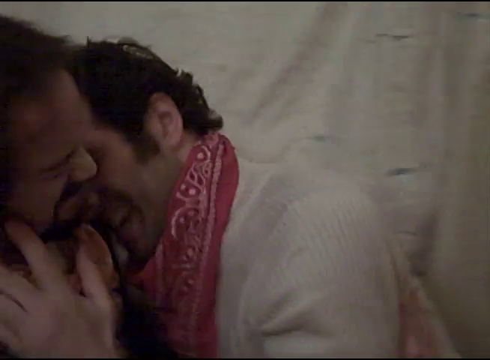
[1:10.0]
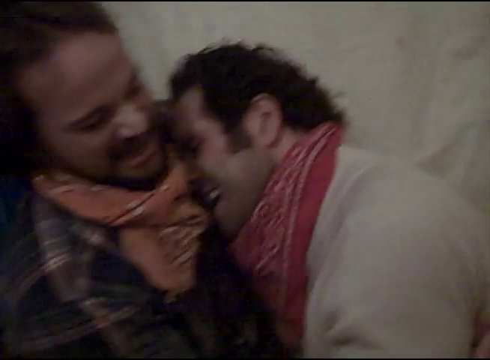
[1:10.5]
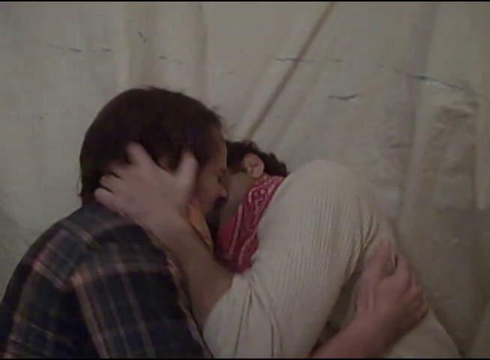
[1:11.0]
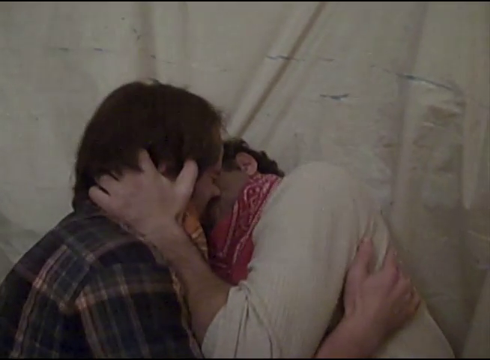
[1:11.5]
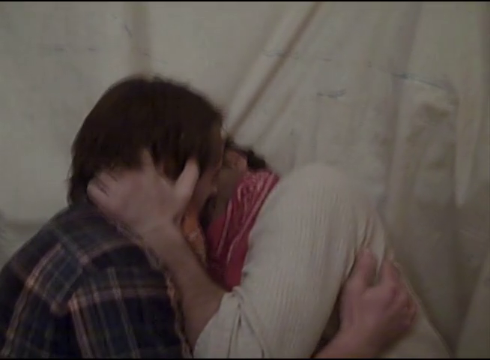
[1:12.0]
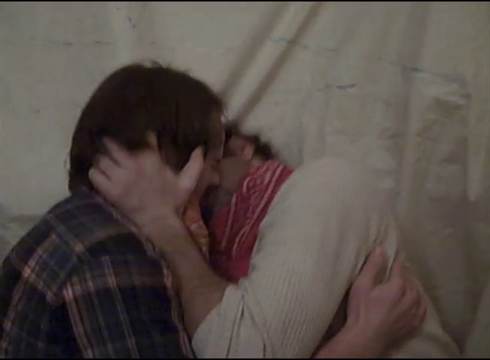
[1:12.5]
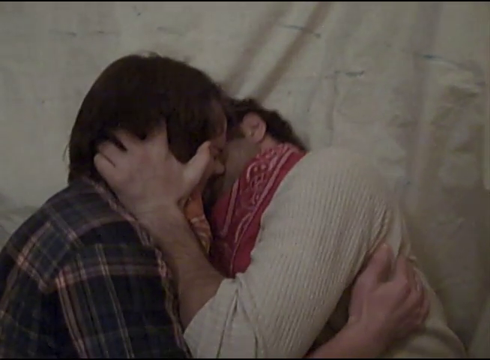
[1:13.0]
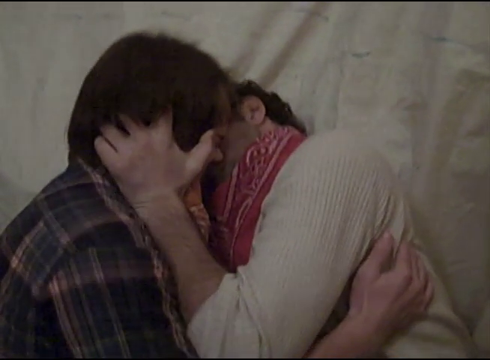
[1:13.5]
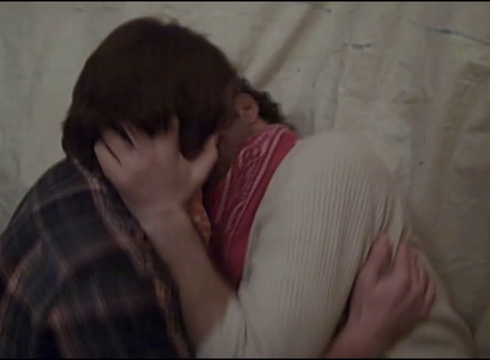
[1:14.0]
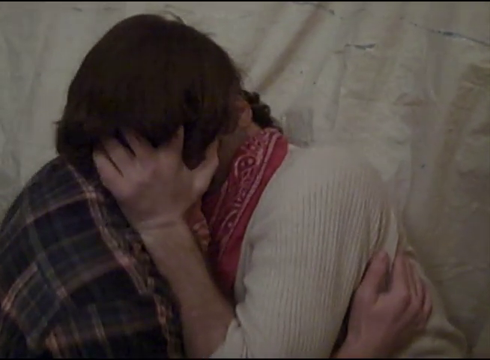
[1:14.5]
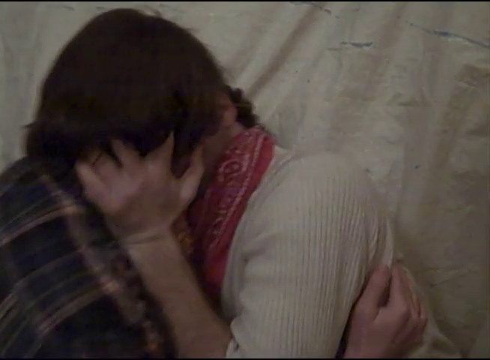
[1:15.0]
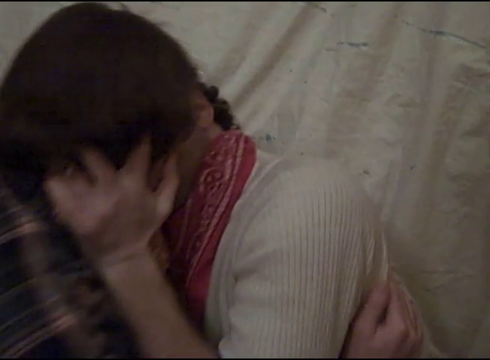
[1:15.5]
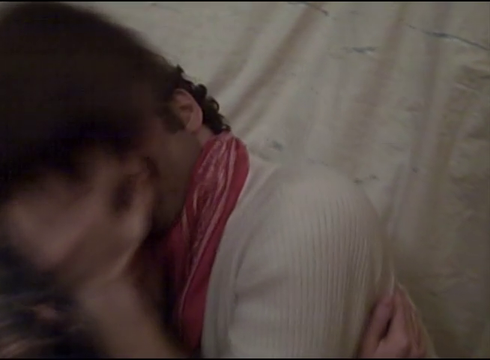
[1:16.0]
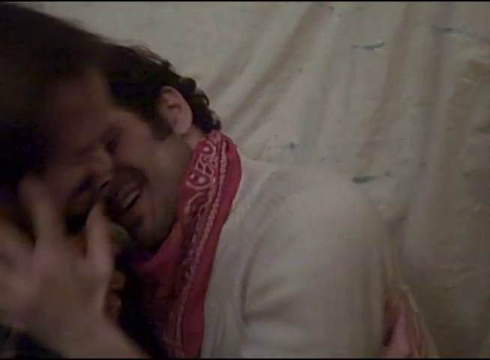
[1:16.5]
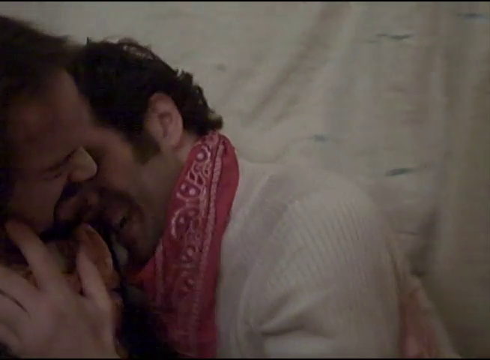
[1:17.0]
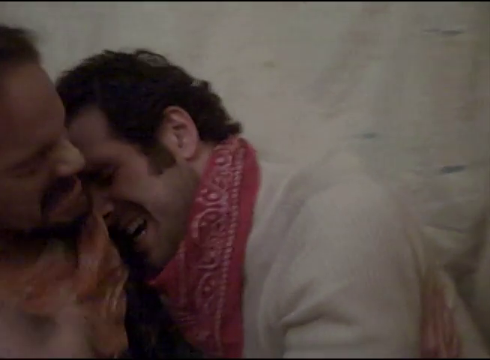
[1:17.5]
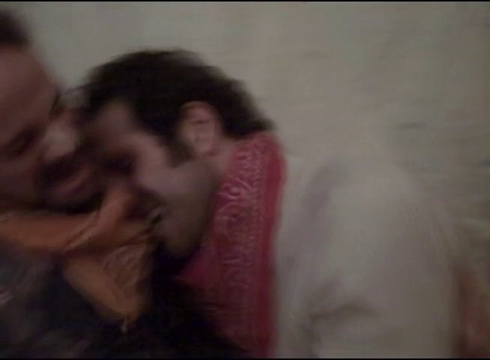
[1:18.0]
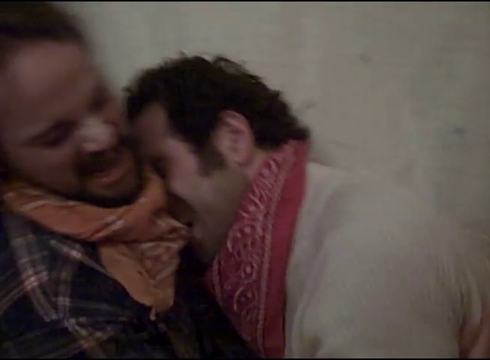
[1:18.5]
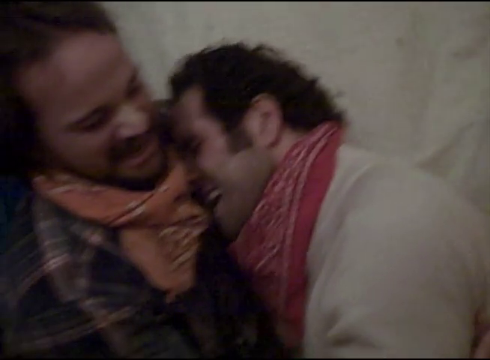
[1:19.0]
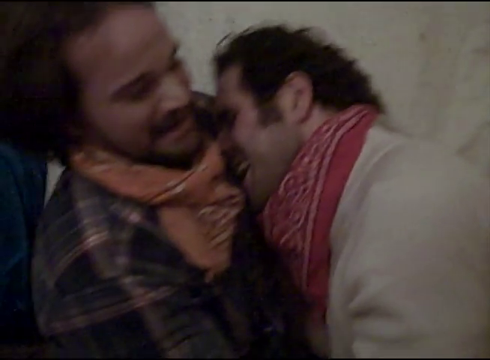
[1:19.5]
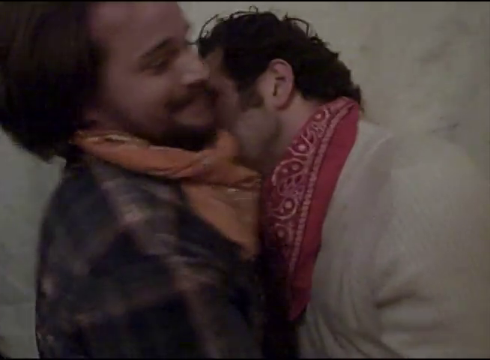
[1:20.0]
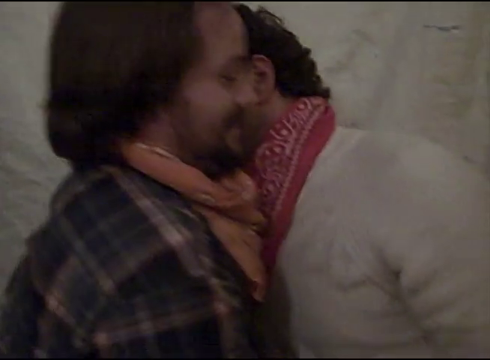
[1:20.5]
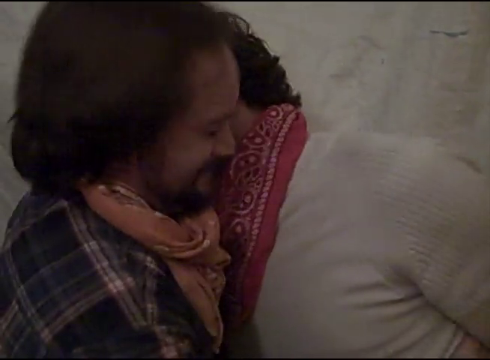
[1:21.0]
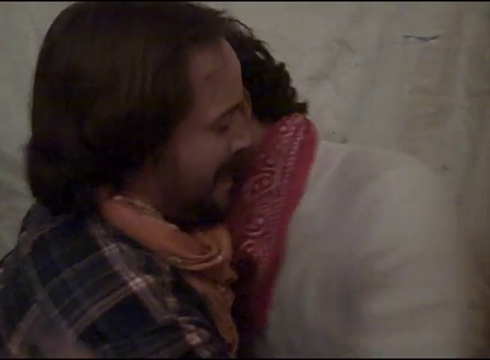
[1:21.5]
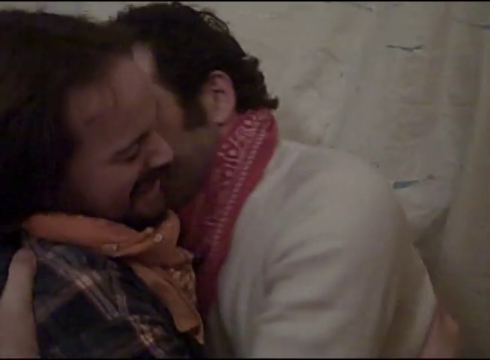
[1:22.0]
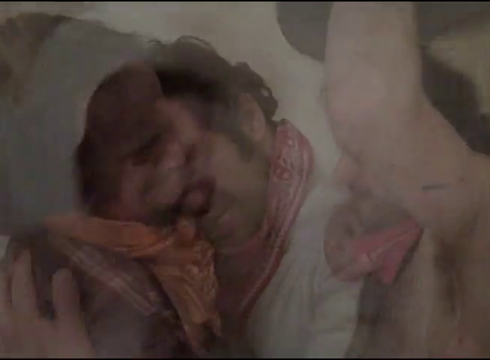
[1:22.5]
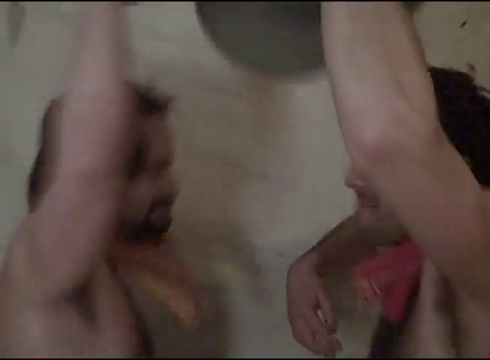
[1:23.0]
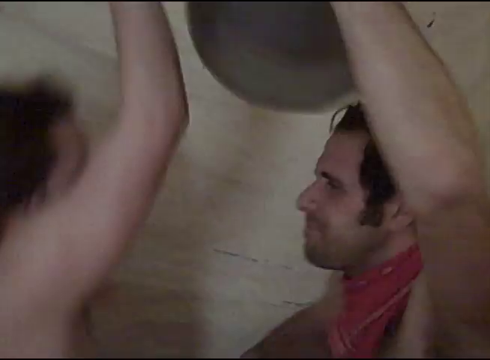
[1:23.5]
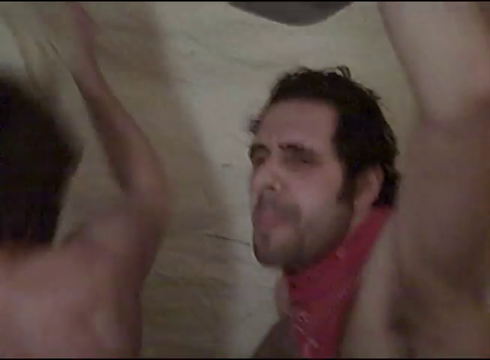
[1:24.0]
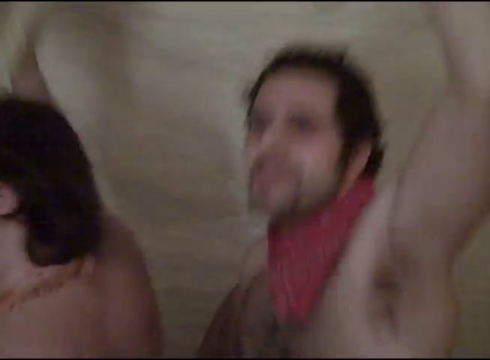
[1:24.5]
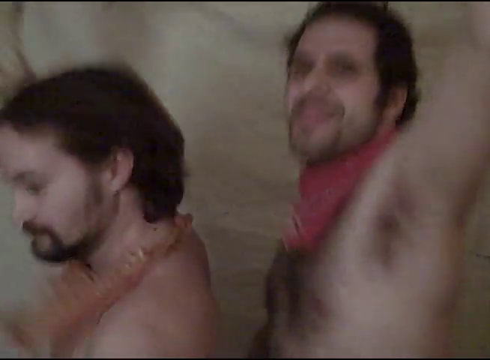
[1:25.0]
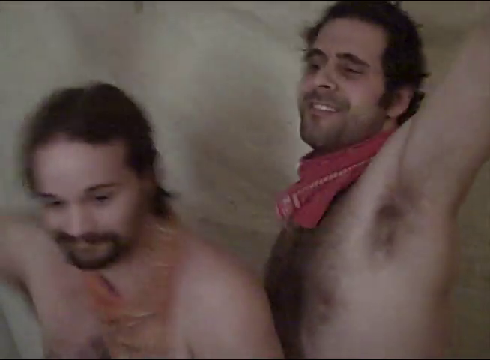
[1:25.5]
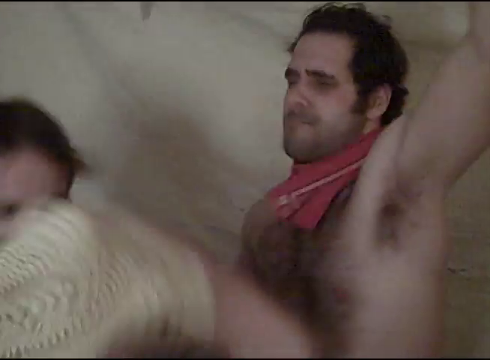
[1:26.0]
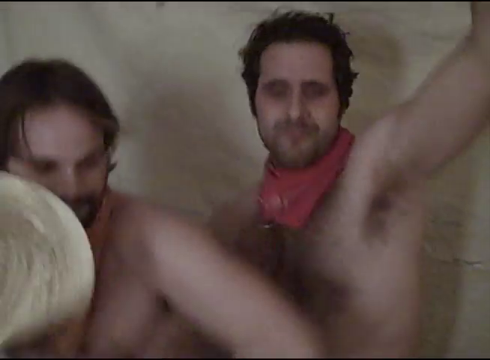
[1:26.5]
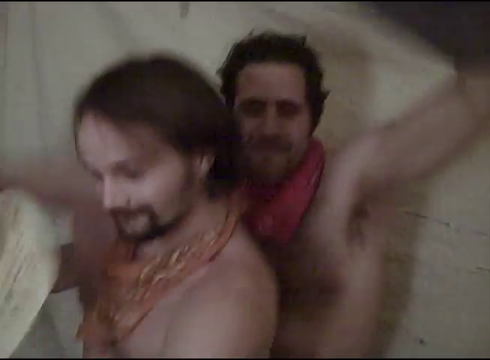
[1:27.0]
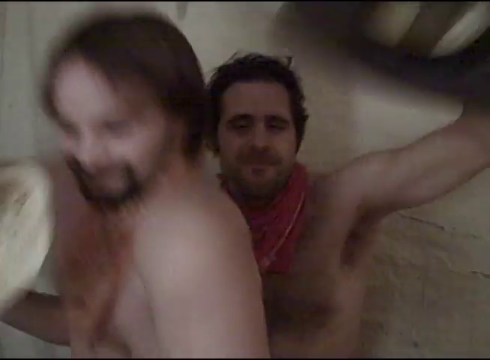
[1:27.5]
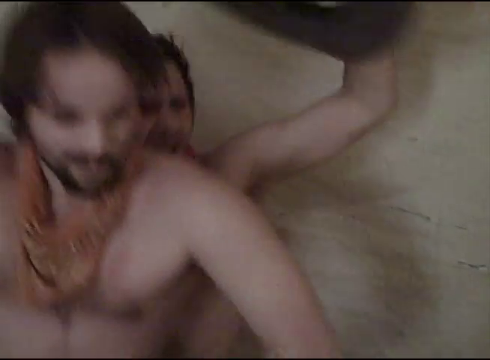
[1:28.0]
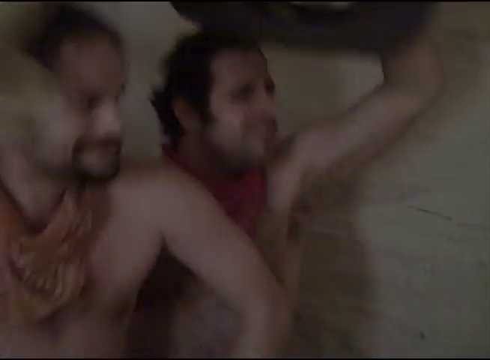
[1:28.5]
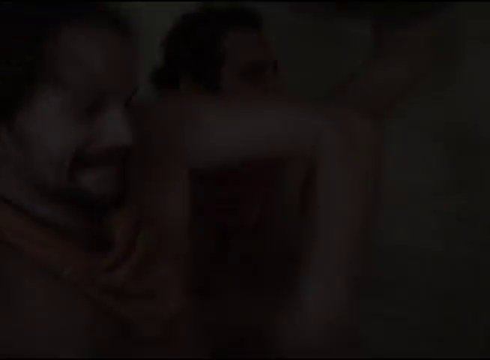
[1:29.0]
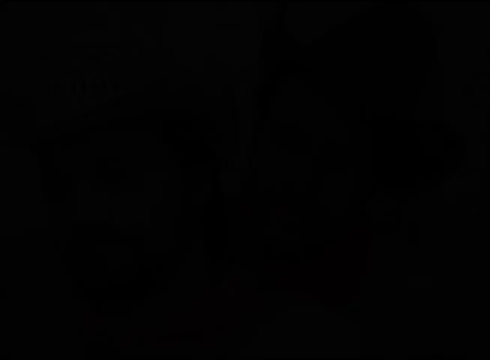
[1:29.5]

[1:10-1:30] In the Brokeback Mountain parody, the two men comically play a love scene in which they have apparently just had a sexual encounter and are now dancing around. They are seen from the chest up, naked except for the bandanas around their necks. The man on the left has a beard, a mustache and brown hair and is perhaps in his early 30s; the man on the right has a mustache and curly brown hair. Both are Caucasian. In the background, what looks like a dingy white sheet hangs as a backdrop. The scene first has them kissing passionately up close while laughing at the same time, and shows them going from fully clothed to naked except for the bandanas.